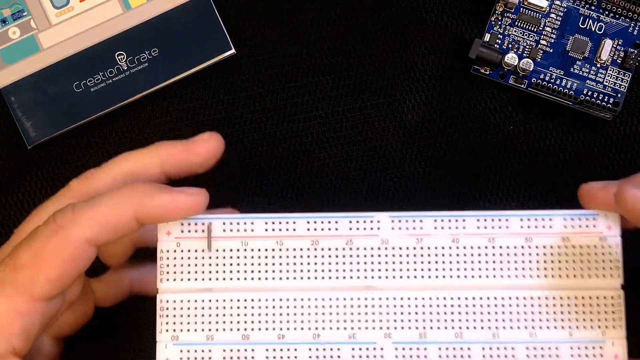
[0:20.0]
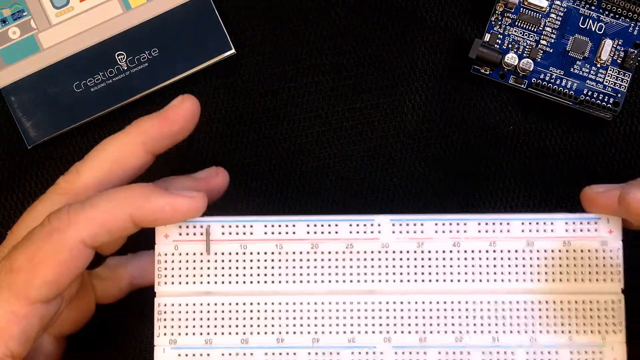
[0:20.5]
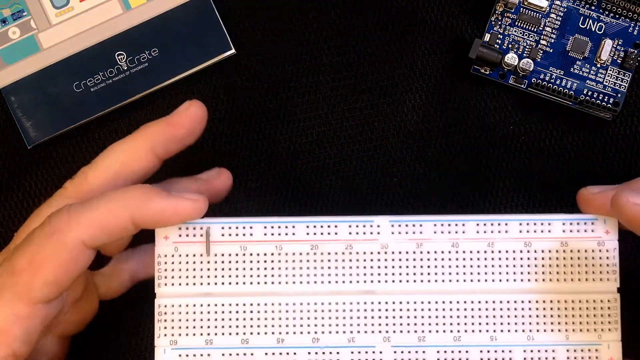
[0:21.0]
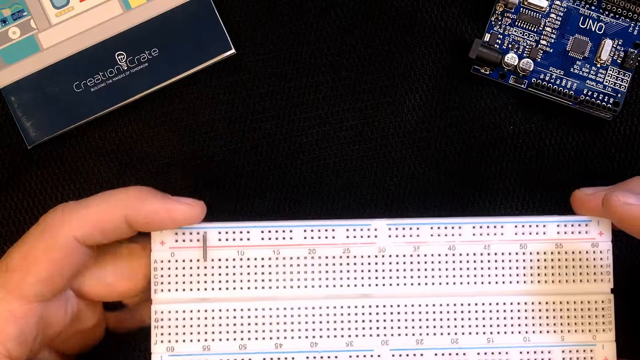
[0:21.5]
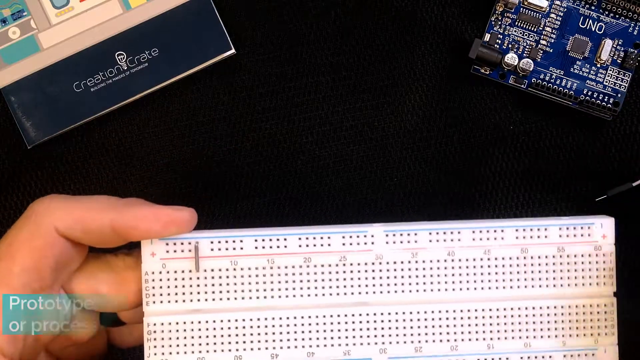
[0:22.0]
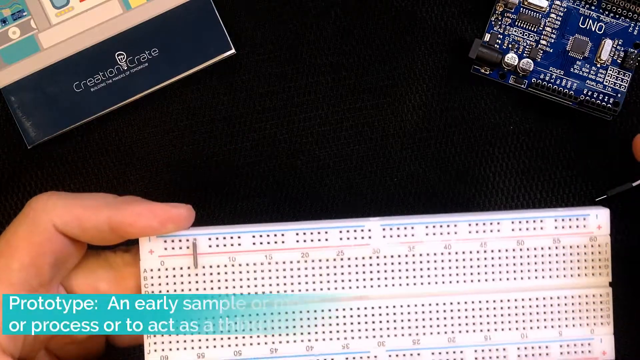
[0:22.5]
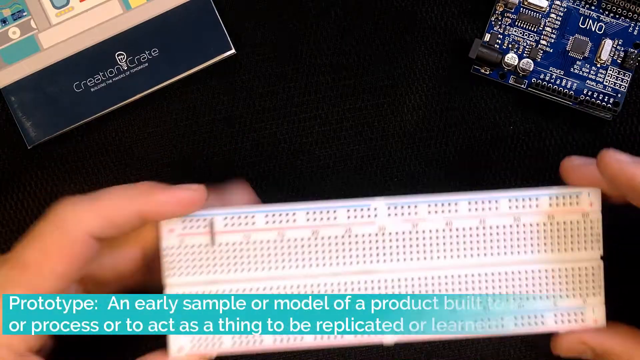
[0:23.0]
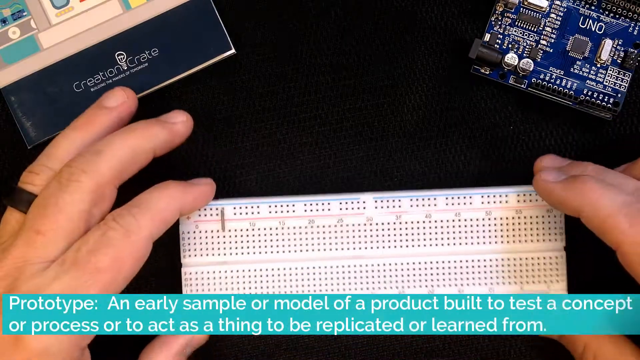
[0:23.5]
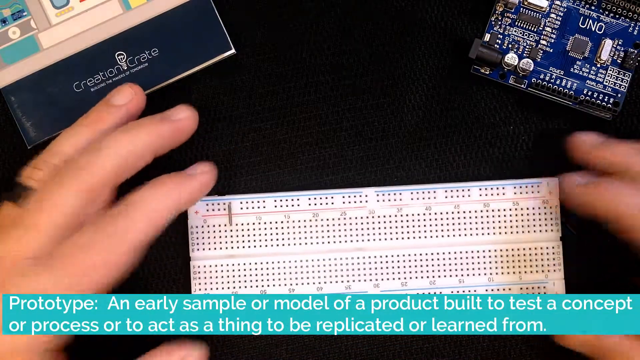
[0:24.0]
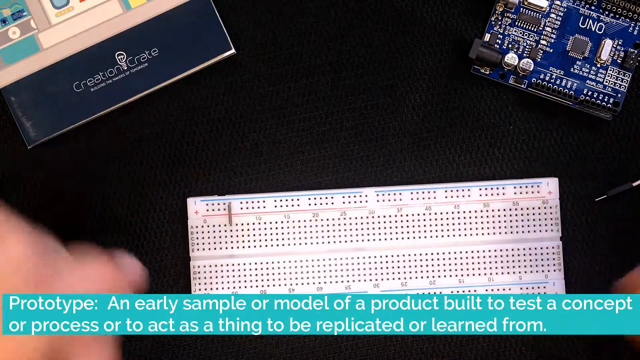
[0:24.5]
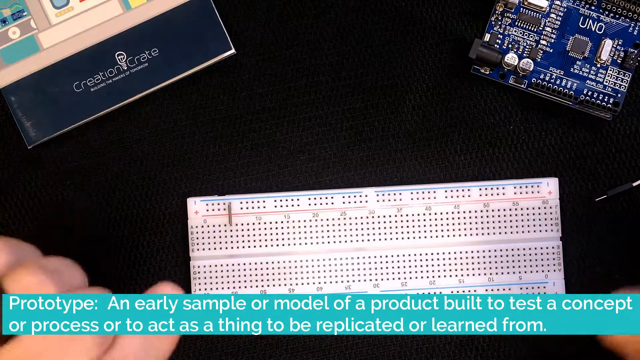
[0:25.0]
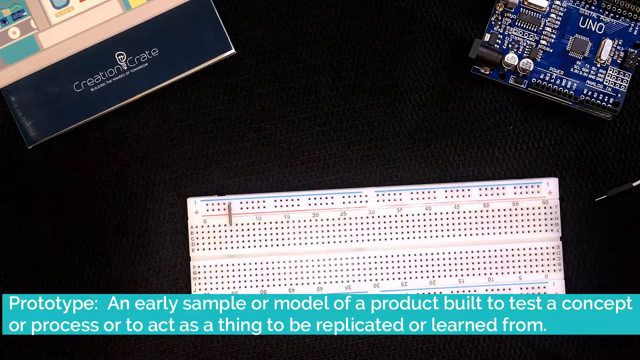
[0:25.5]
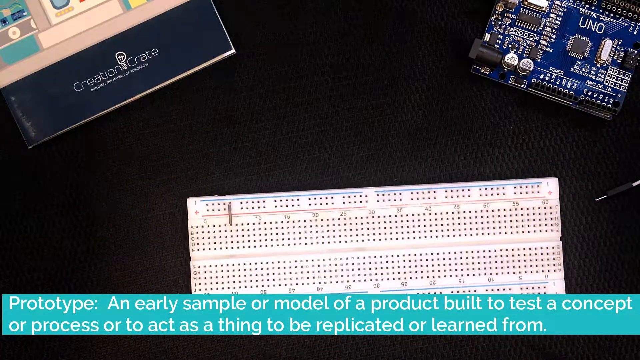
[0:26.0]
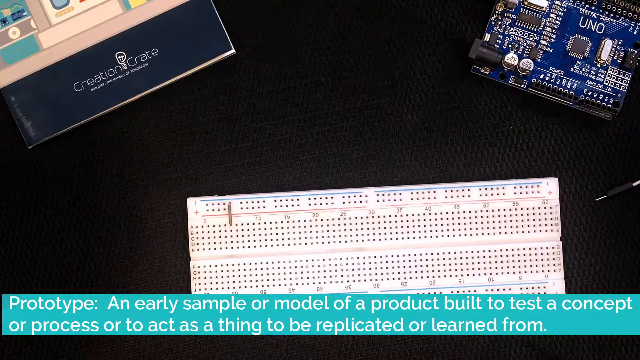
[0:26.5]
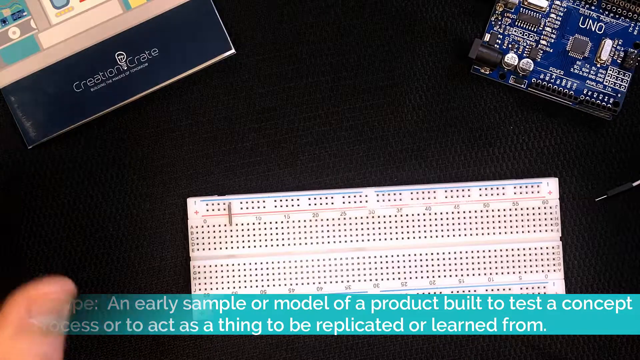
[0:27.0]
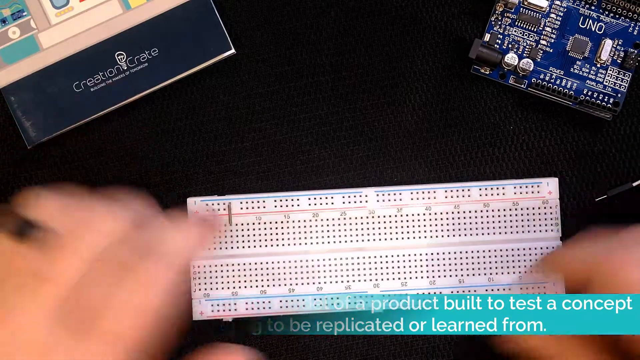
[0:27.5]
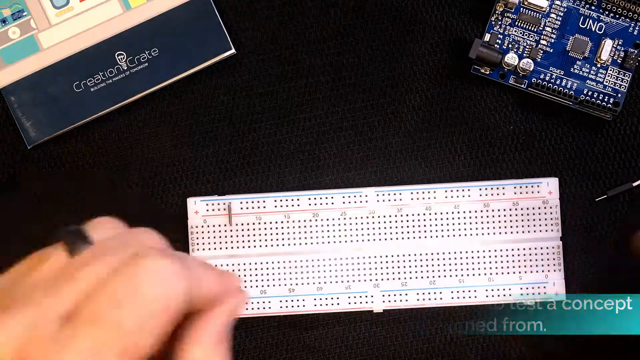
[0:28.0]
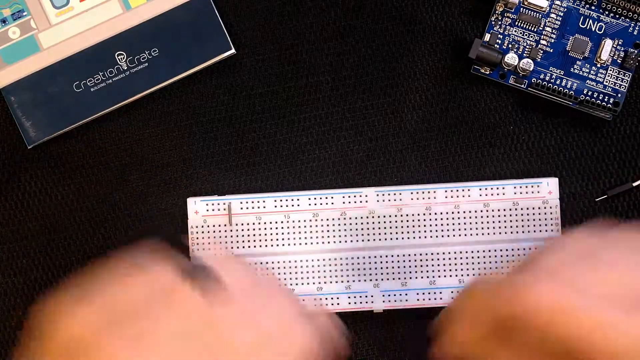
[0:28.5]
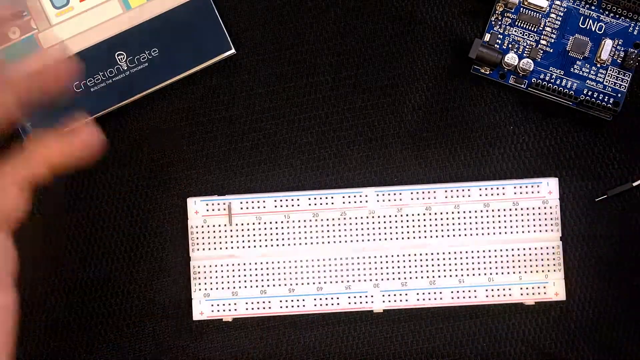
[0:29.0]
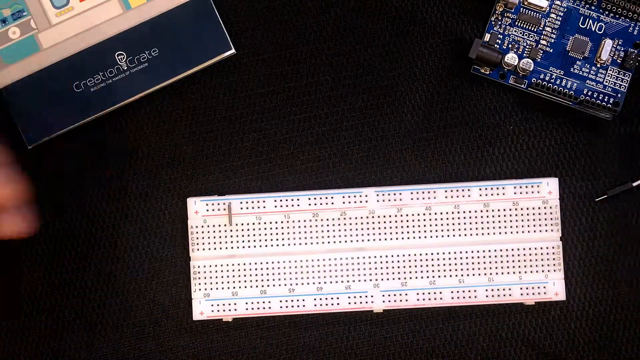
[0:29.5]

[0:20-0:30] The breadboard appears with some text about a prototype: "prototype, an early sample or model of a product built to test a concept or process". The descriptor's fingers are visible, showing how the process works. In the top right corner there is a panel with a pen below it, along with the creation crates label. The breadboard and other components are placed on a dark background.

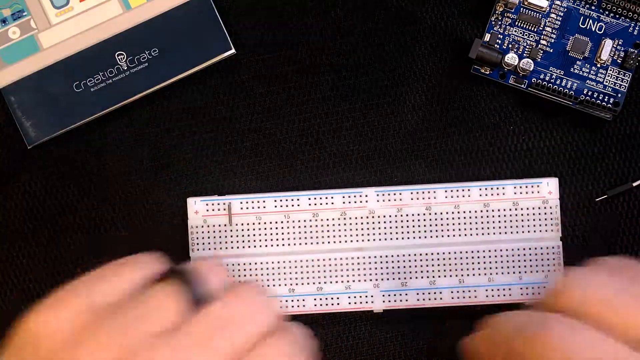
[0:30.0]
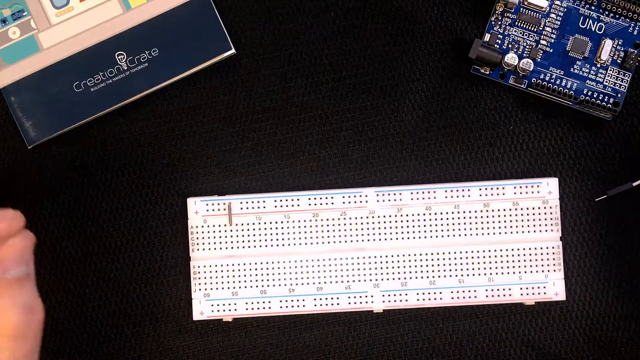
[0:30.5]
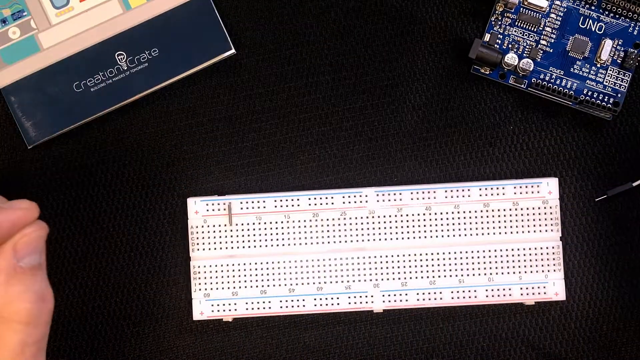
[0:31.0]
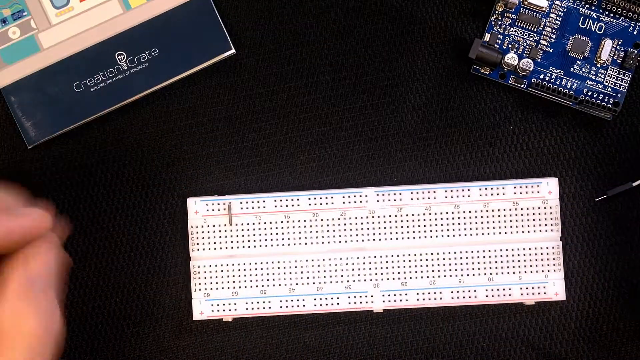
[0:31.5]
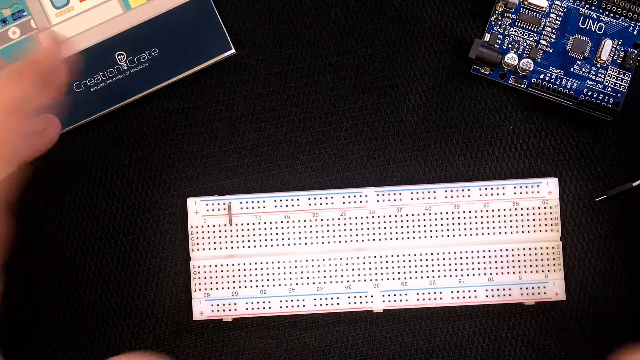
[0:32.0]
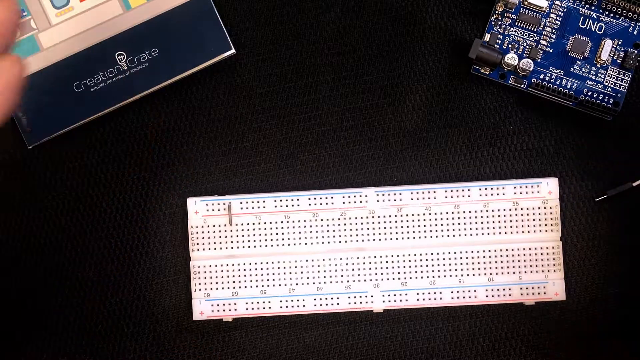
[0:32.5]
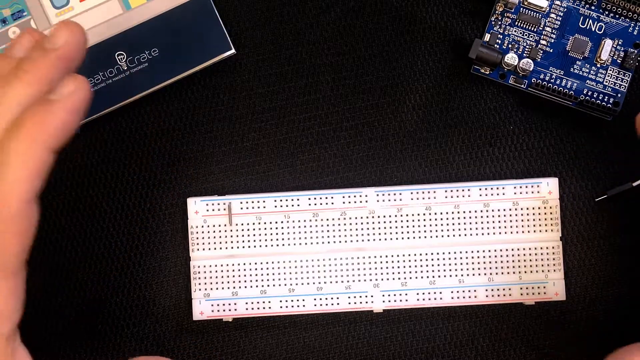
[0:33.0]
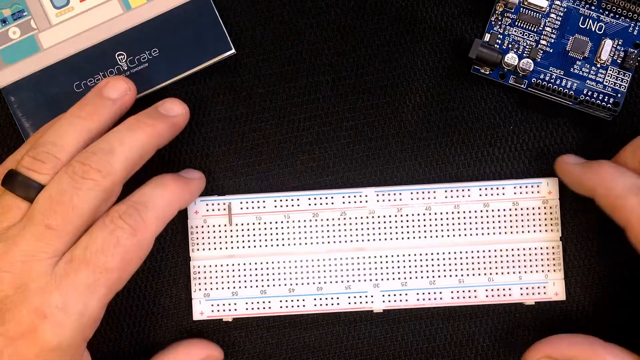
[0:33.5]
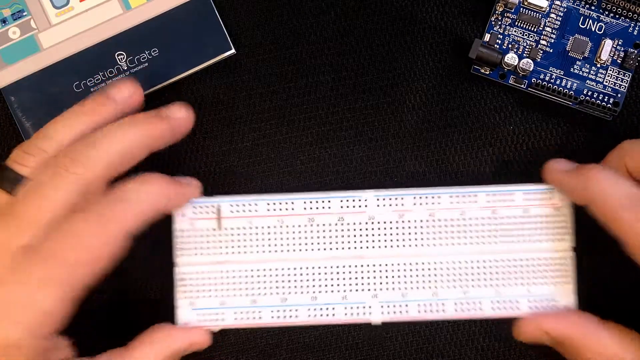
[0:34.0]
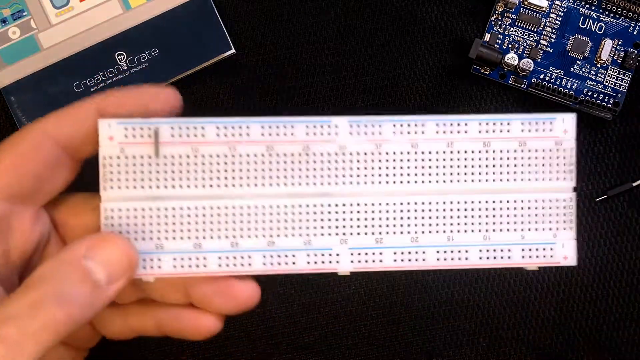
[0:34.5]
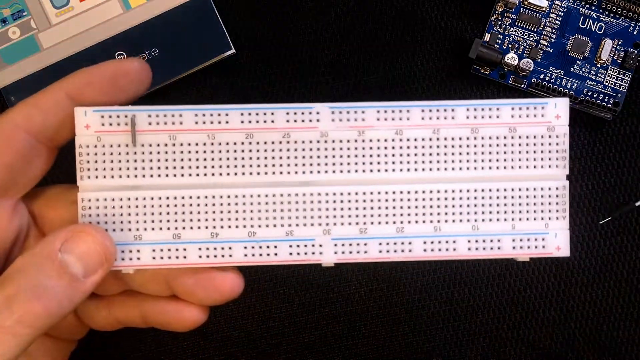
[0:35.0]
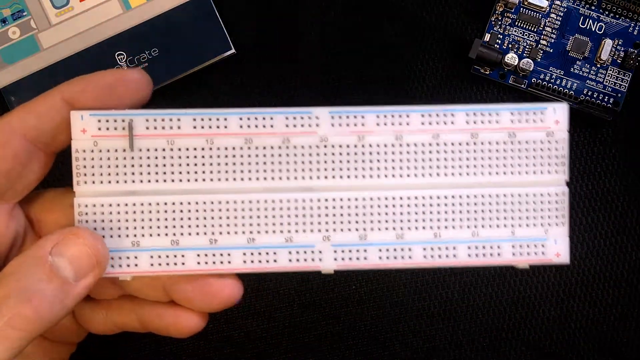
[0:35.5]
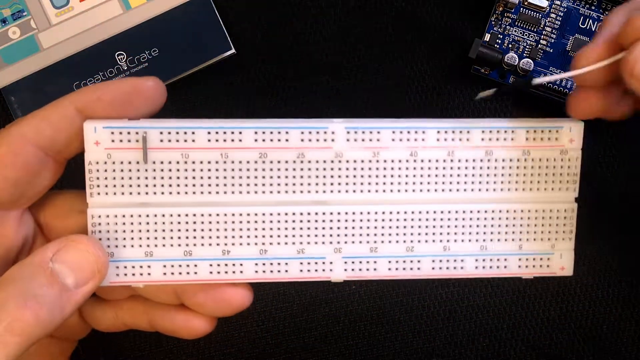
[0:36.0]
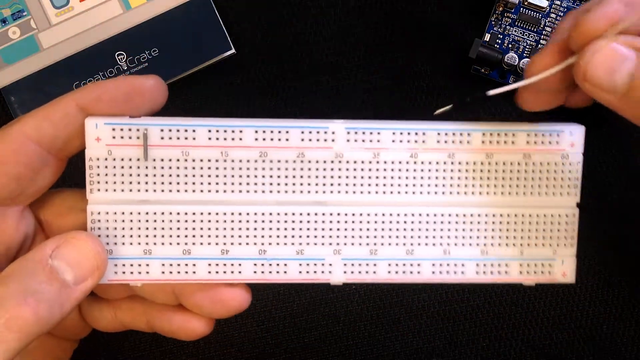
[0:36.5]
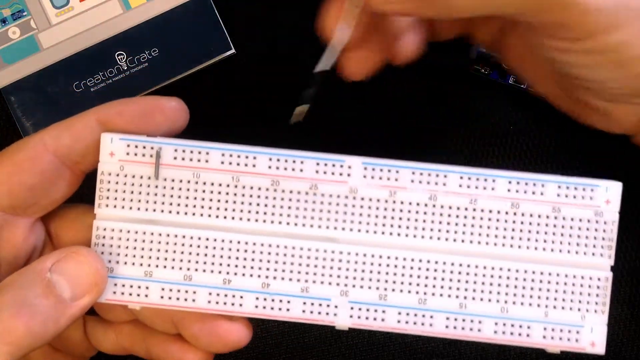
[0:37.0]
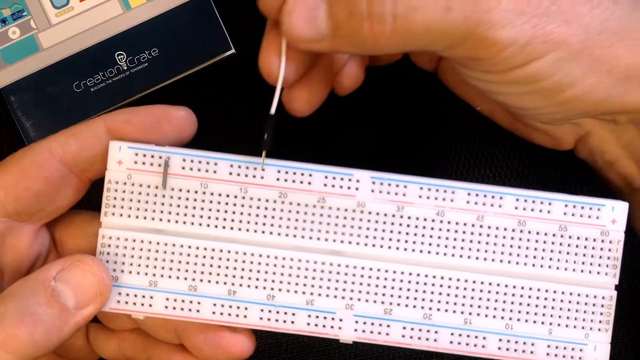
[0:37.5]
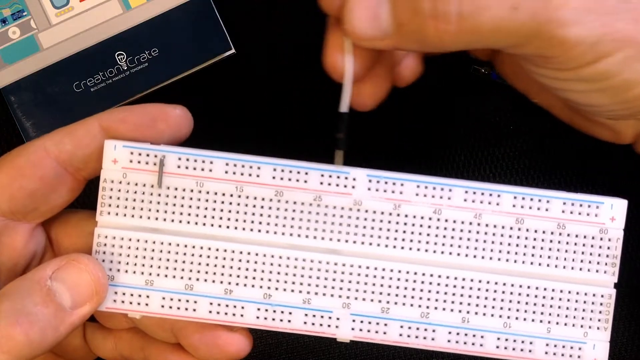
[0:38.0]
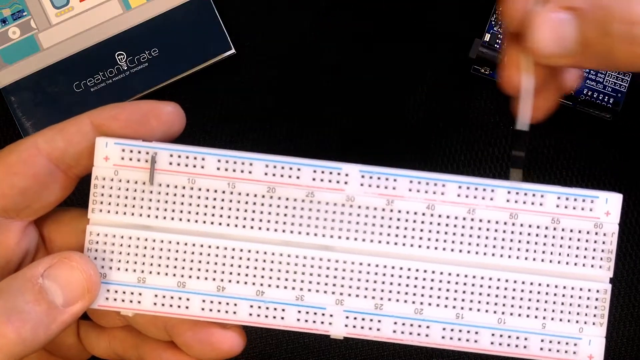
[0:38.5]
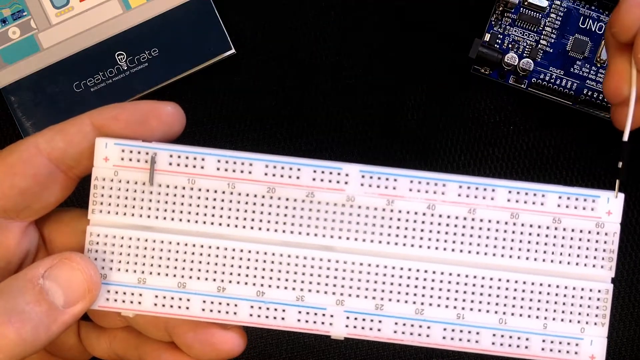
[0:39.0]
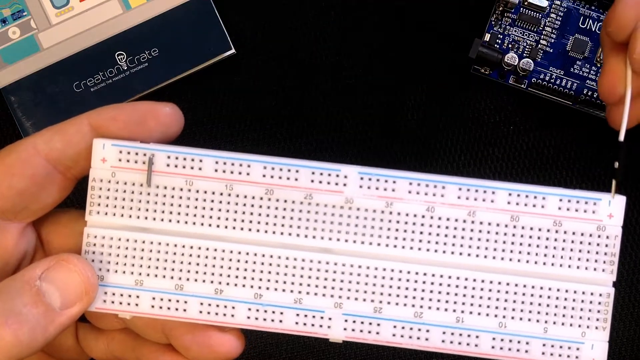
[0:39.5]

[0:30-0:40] The narrator raises the breadboard and points out specific holes in it. The numbers 0, 5, 10, 15, 20, 25, 30, 35, 40, 45, 50, 55 and 60 are visible, with the letters C and G beside them. A panel is in the top right corner of the screen and a creation crate is in the top left corner, all on a black, dark background.